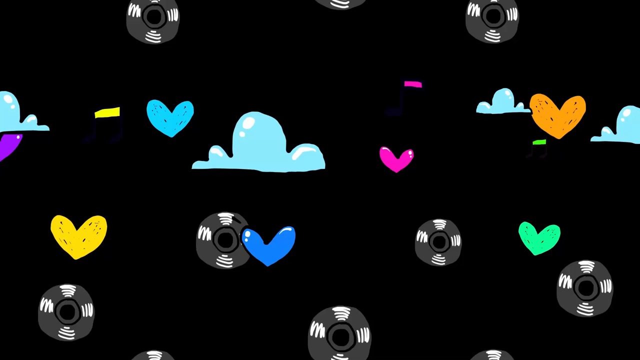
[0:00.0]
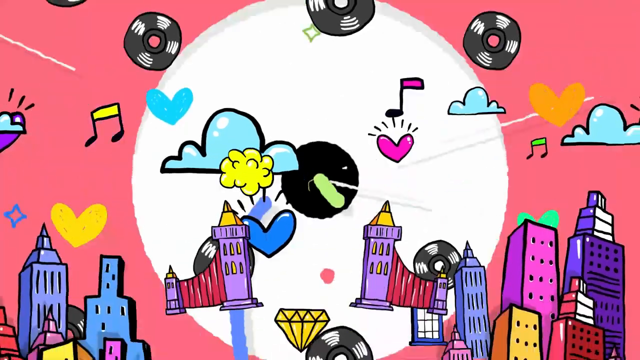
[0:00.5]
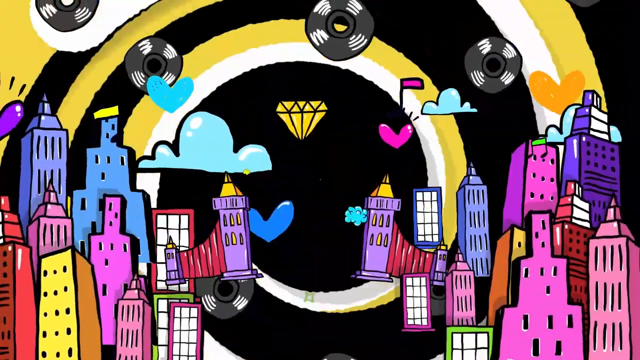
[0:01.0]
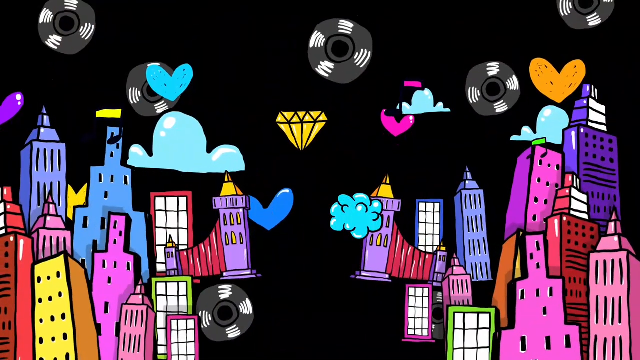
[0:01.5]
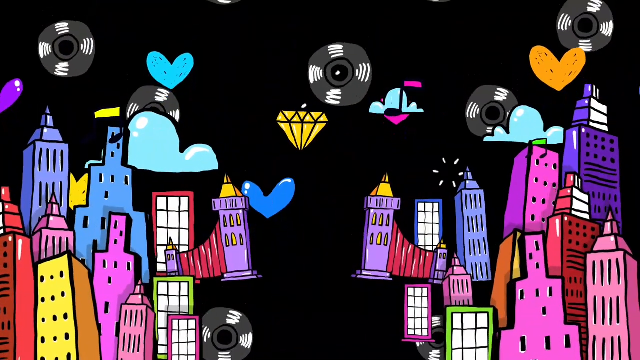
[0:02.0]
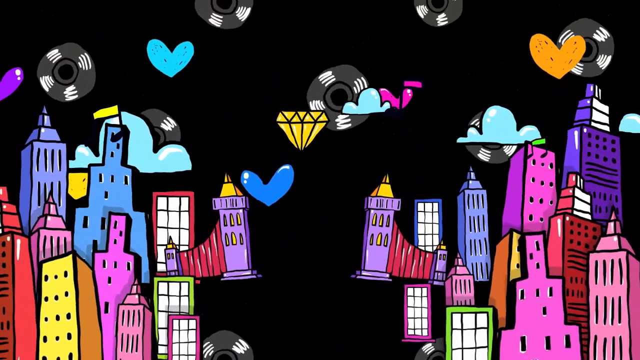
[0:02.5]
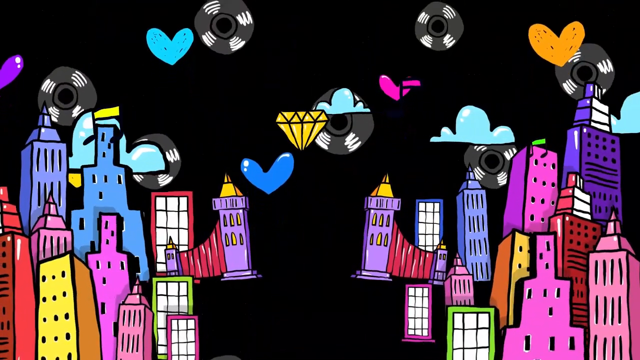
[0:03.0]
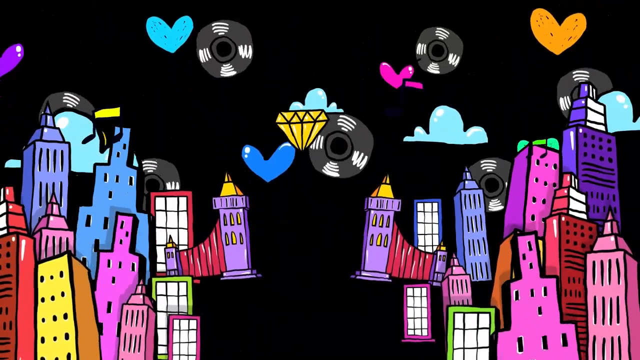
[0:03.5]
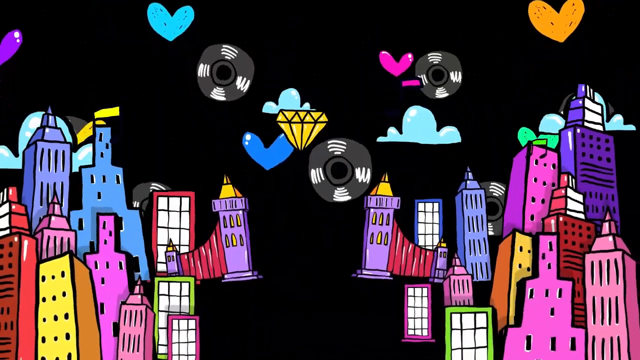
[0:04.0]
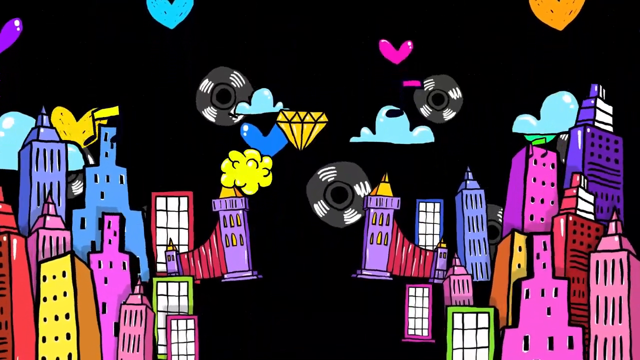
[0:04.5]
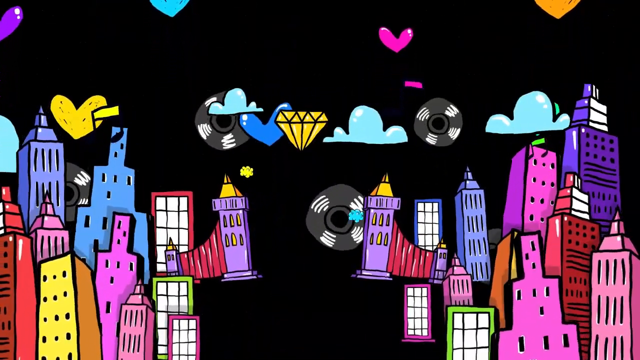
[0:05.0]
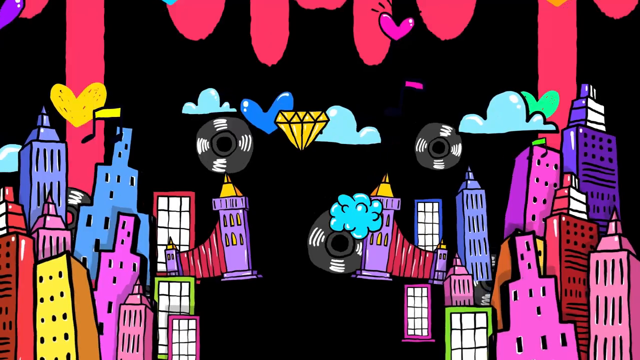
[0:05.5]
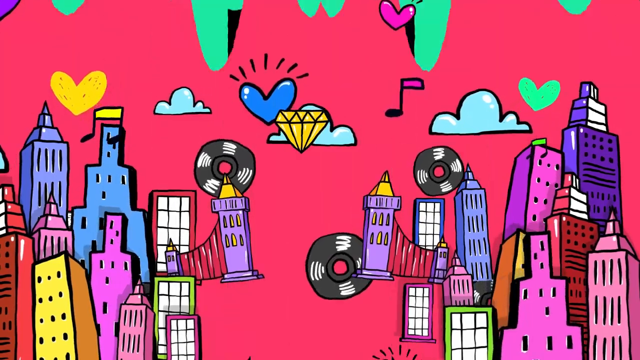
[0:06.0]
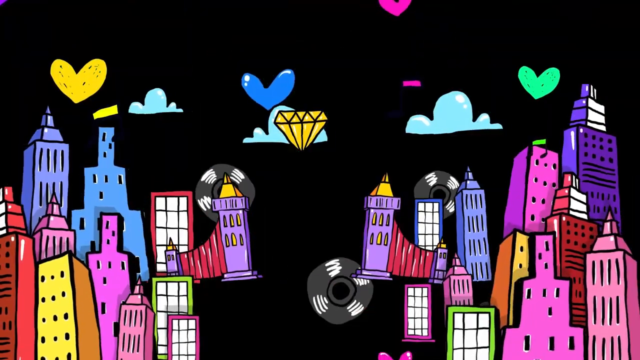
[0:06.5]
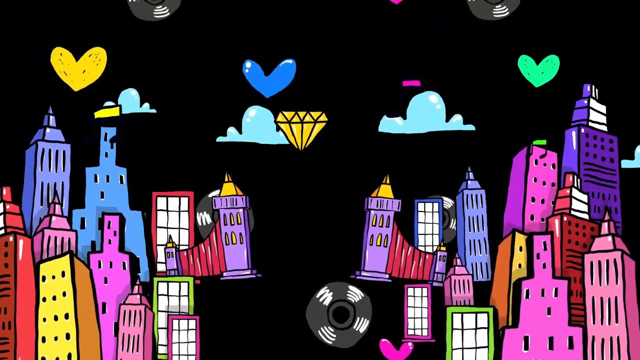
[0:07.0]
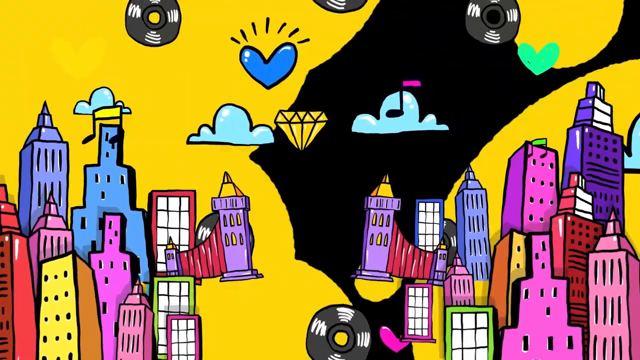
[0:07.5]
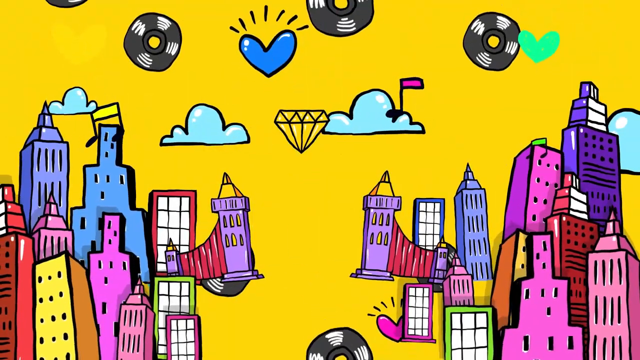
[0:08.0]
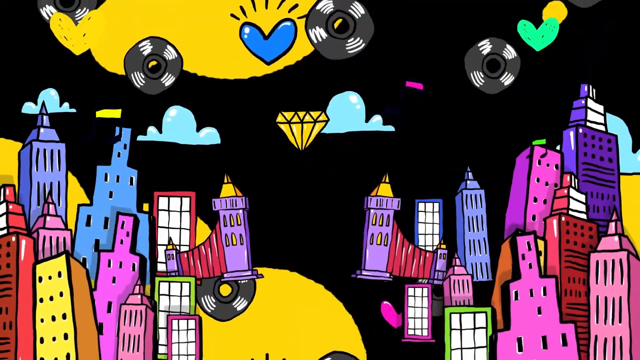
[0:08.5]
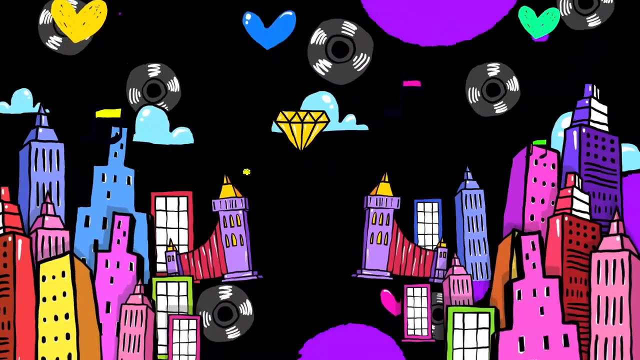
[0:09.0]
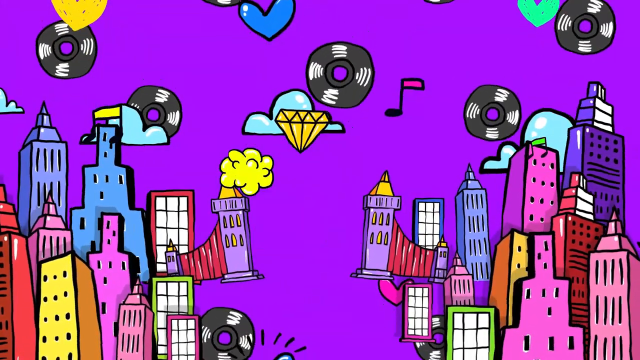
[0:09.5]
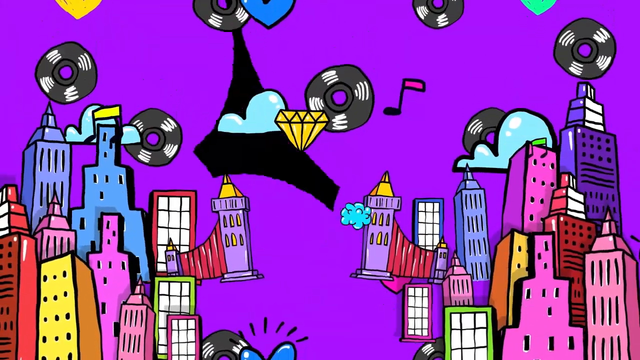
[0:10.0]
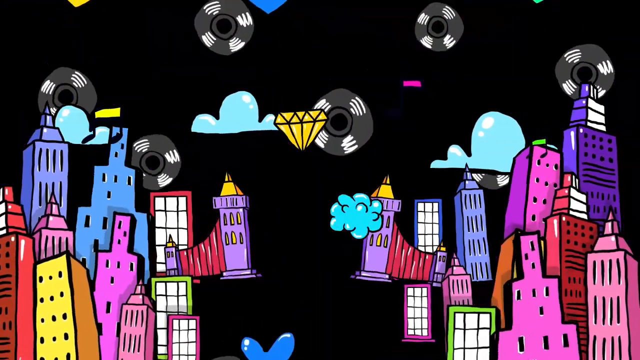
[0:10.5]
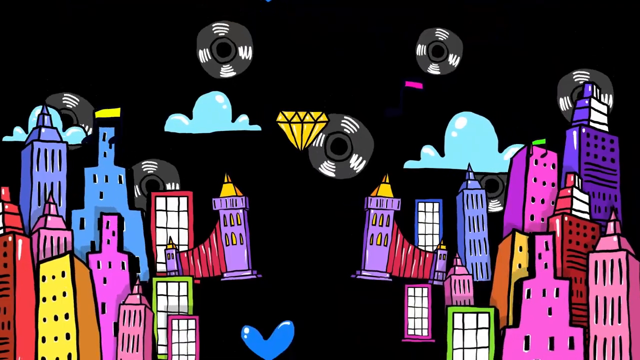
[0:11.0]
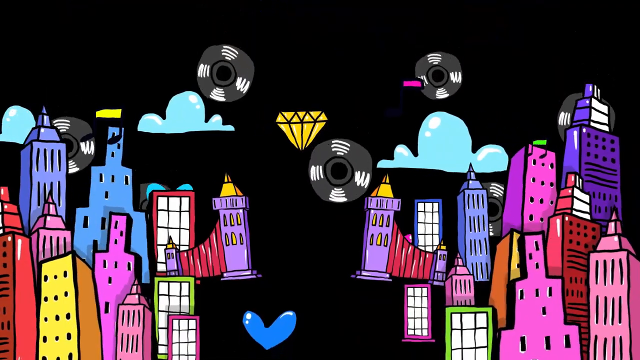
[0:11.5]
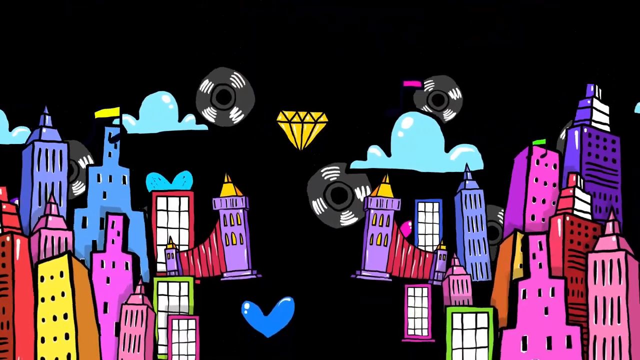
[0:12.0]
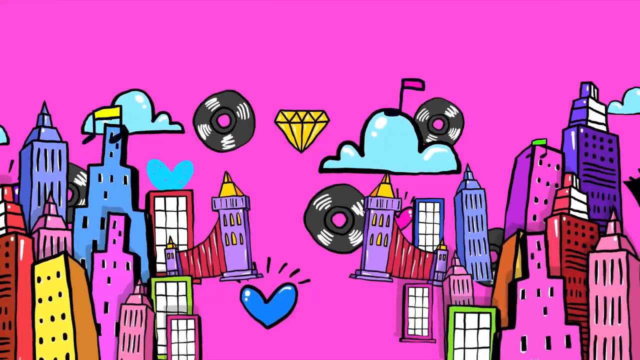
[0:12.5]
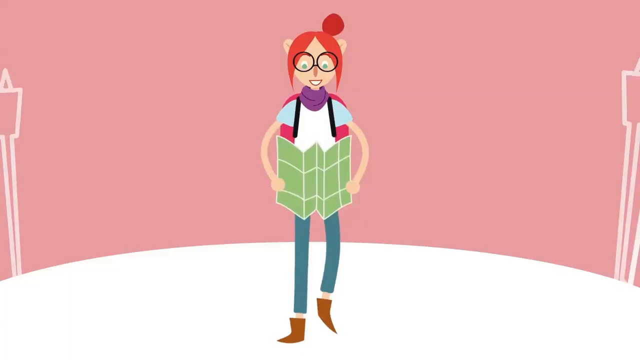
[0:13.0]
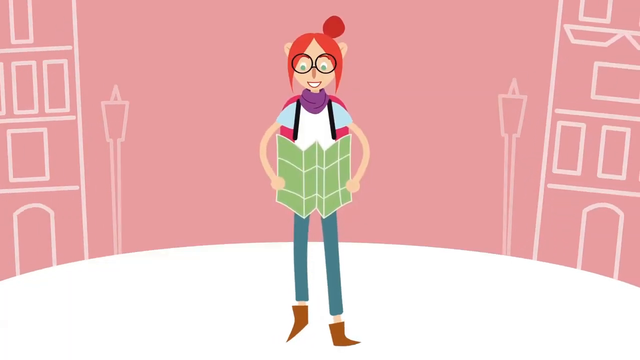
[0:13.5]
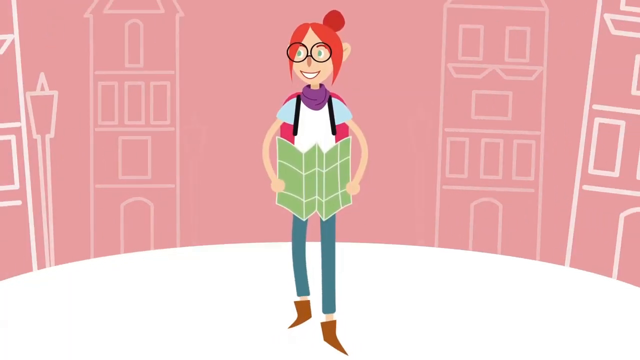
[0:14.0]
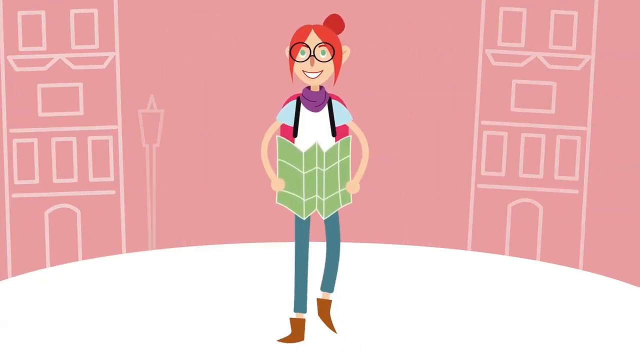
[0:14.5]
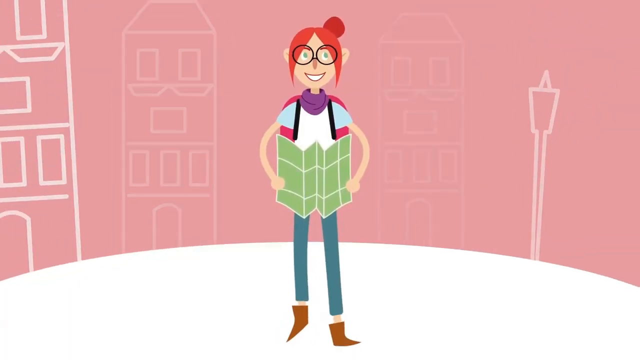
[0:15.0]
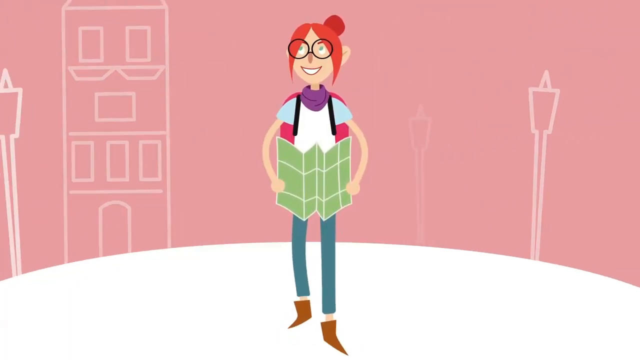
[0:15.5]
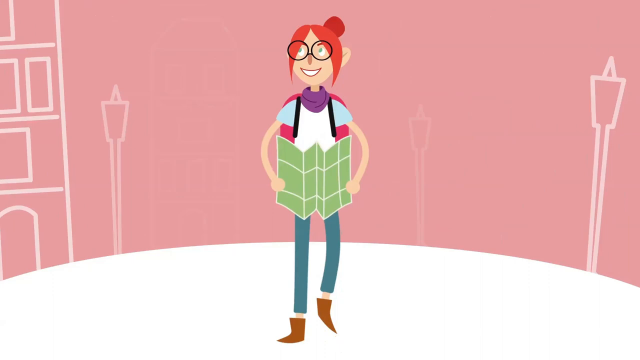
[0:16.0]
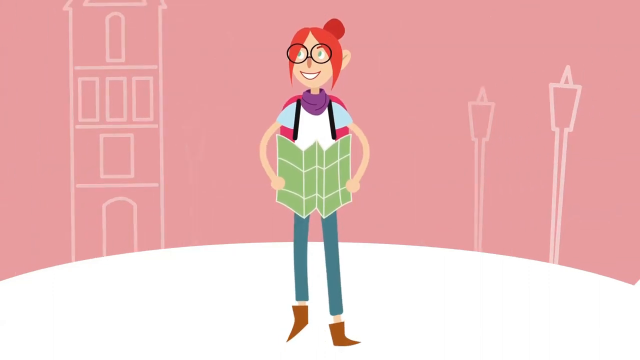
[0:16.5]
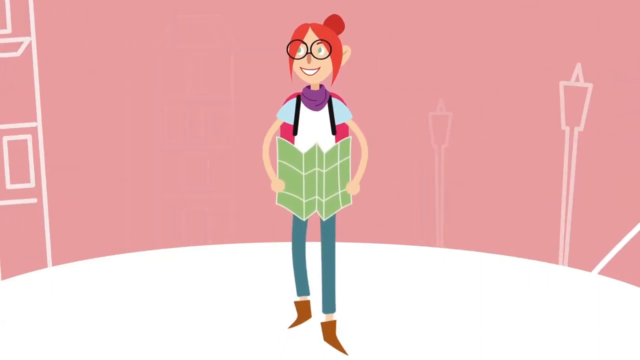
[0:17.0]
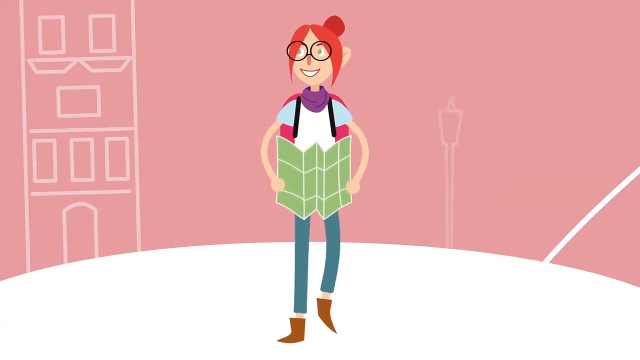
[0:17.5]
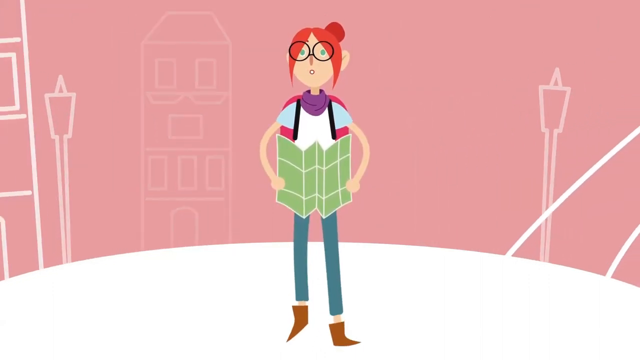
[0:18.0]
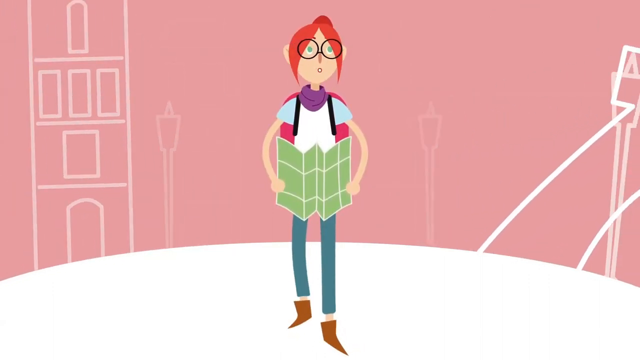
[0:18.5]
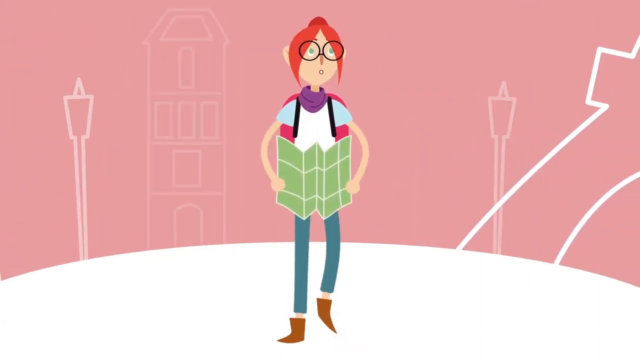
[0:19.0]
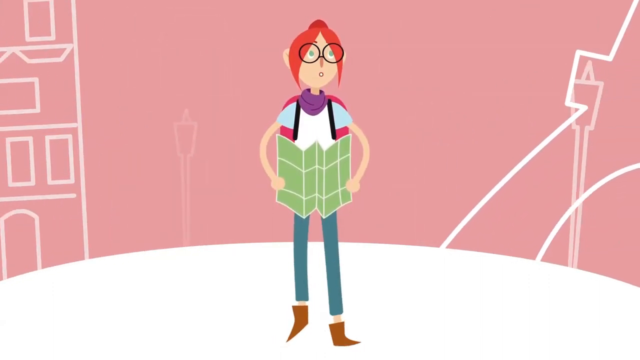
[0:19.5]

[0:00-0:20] The video opens on what appears to be some kind of computer-generated image, with a number of hearts, records and clouds. It then shows a cityscape with many different skyscrapers, with the records, clouds and hearts in the background. A diamond is in the middle, along with music notes, and they are sort of flashing around in the background of the cityscape. The background colour changes from black to pink, then turquoise, then back to black, and it looks like it is dripping from the back. It then transitions to a yellow background that comes in almost like clouds, from the outside in, before going back out to black, and the same thing happens with purple. All the while, the clouds float from right to left. The background then transitions to pink again. A girl walks forward holding a map, wearing a backpack and glasses, against a pink background with buildings; everything moves from the right and left sides toward the back center as she walks.